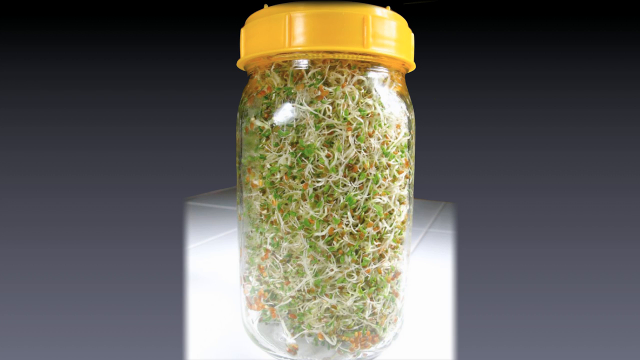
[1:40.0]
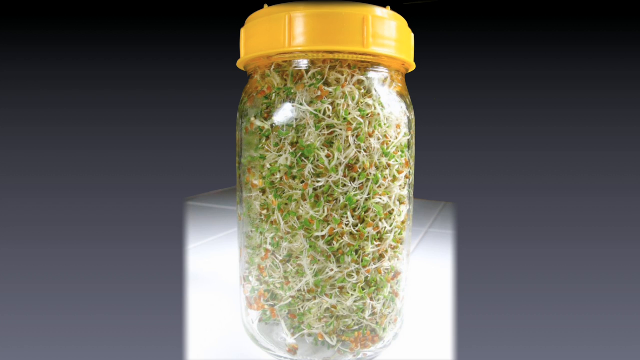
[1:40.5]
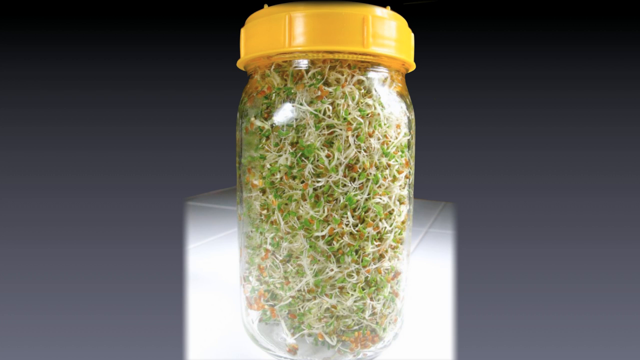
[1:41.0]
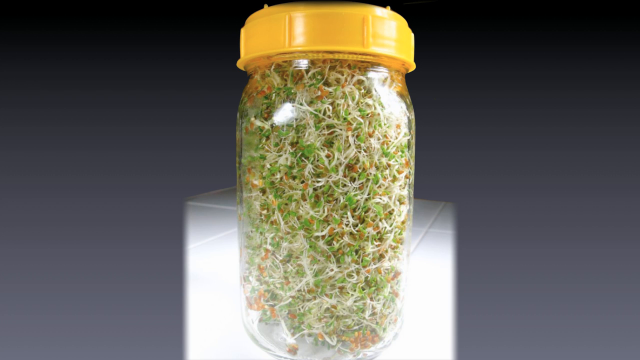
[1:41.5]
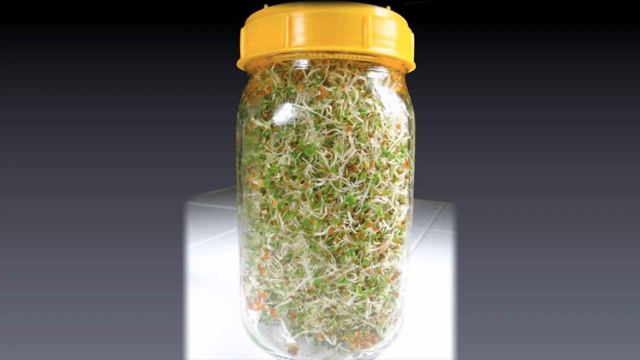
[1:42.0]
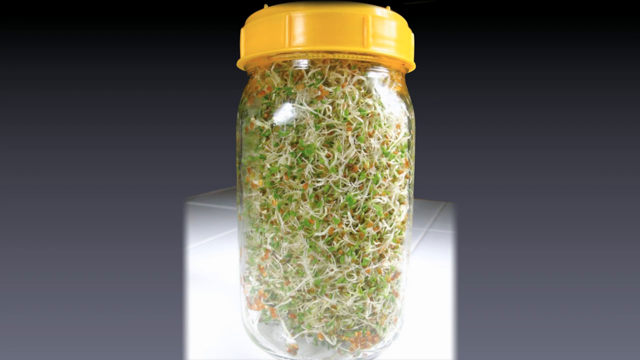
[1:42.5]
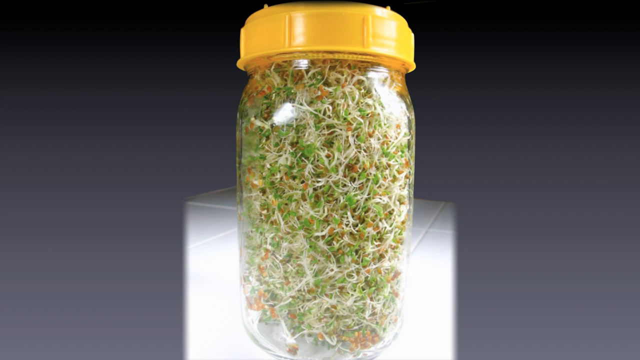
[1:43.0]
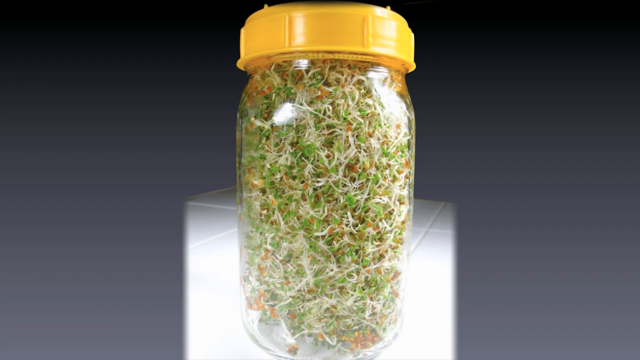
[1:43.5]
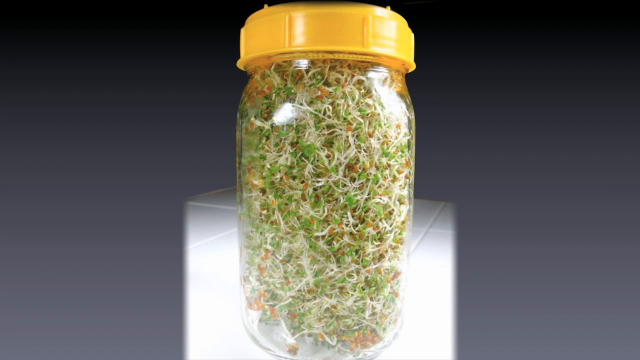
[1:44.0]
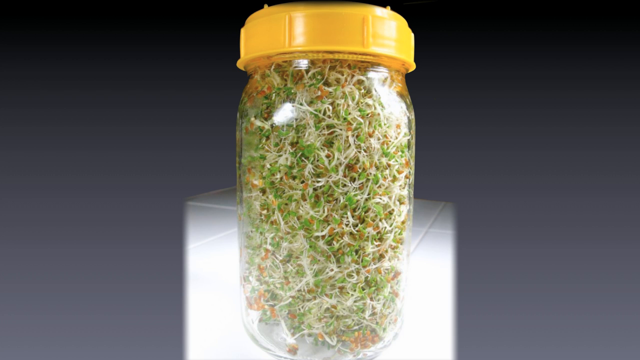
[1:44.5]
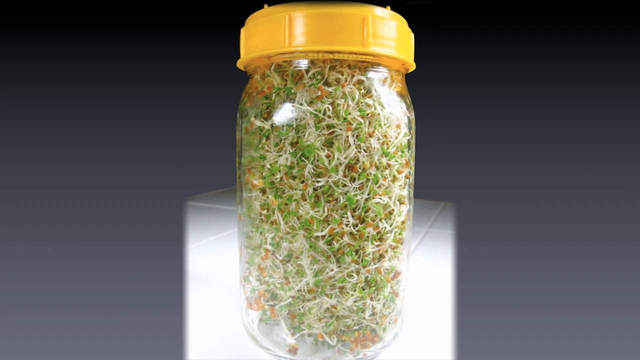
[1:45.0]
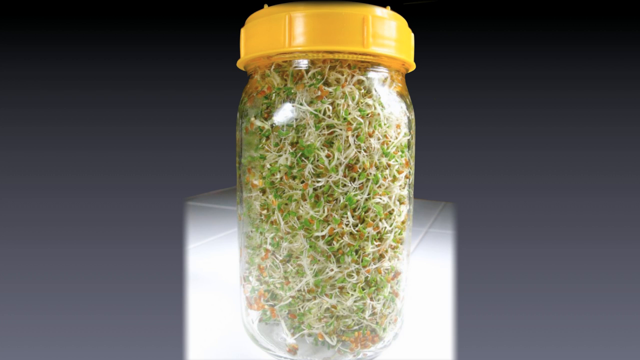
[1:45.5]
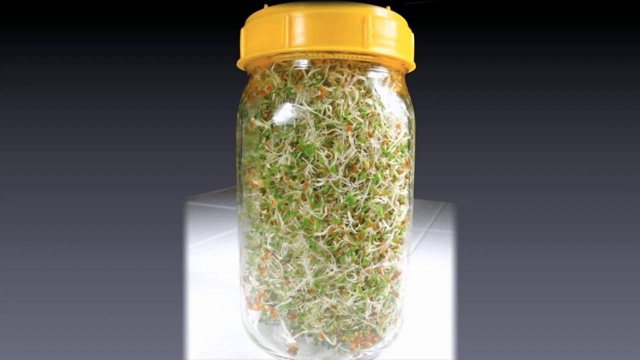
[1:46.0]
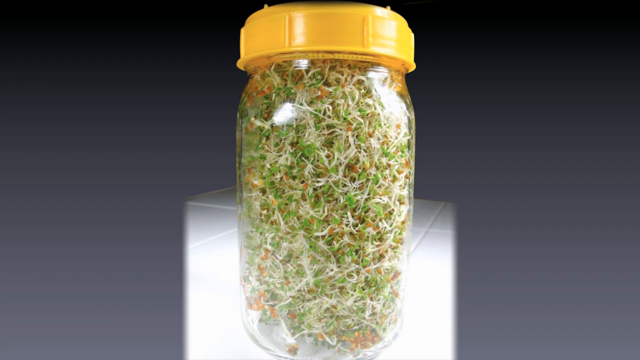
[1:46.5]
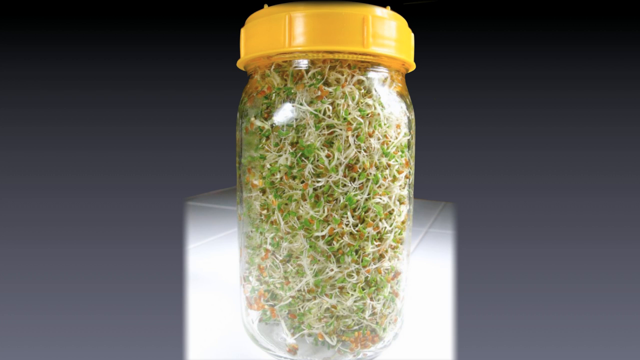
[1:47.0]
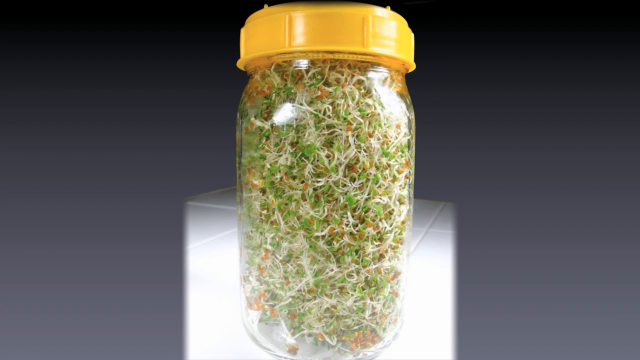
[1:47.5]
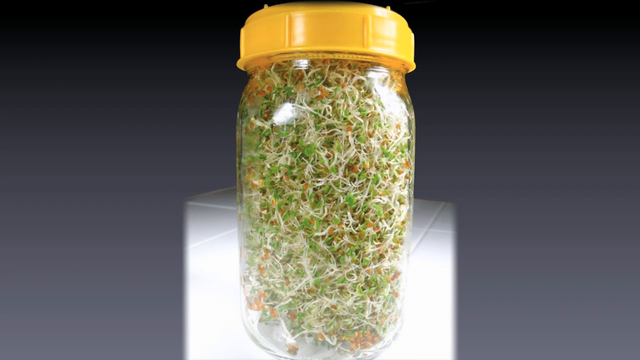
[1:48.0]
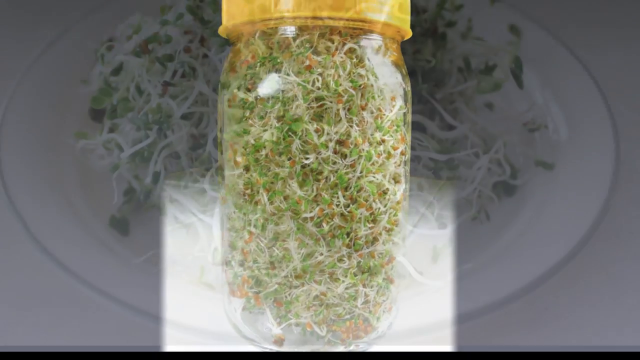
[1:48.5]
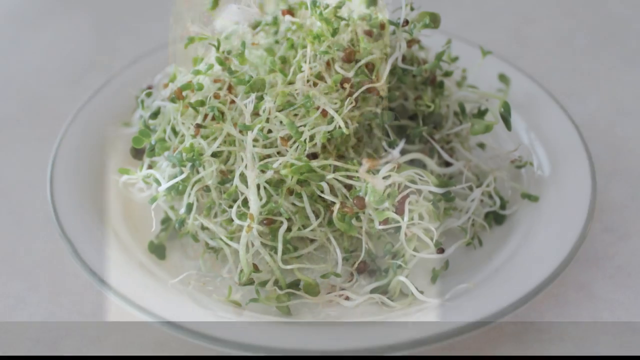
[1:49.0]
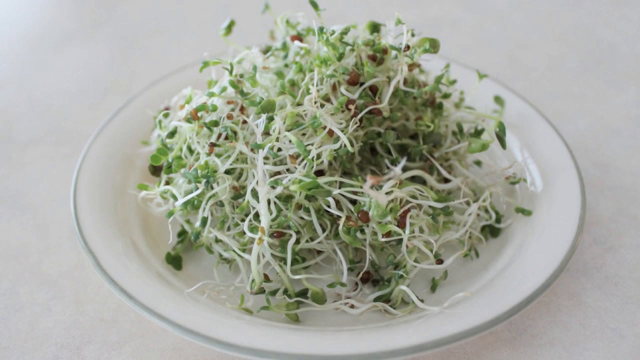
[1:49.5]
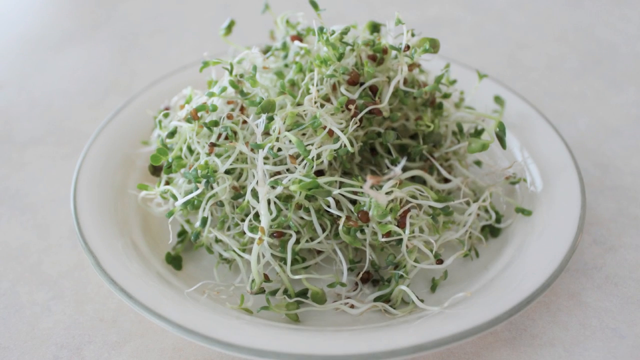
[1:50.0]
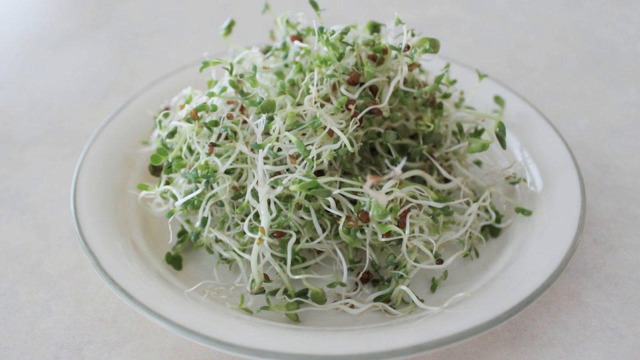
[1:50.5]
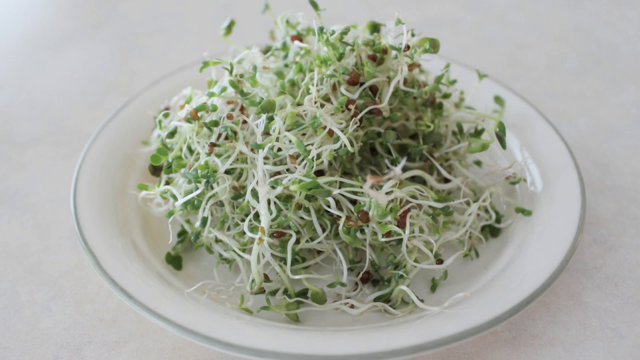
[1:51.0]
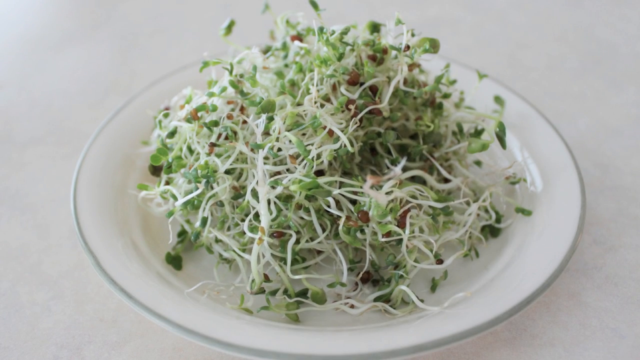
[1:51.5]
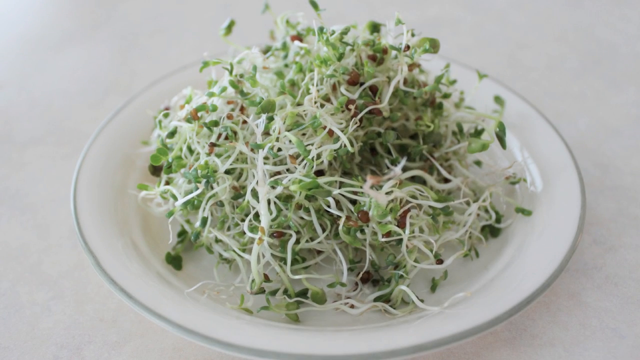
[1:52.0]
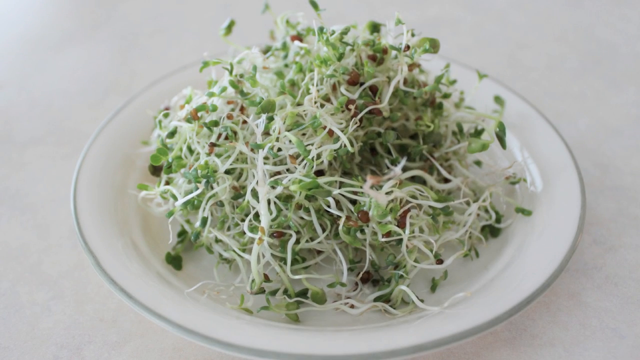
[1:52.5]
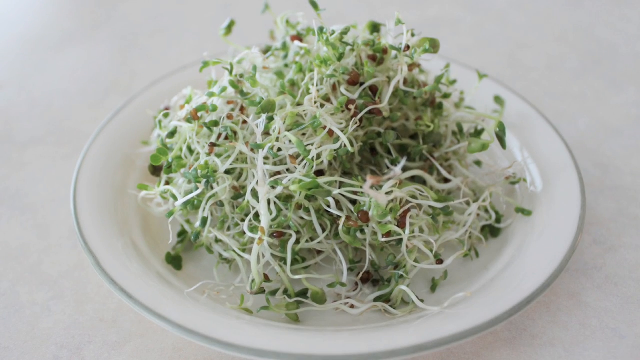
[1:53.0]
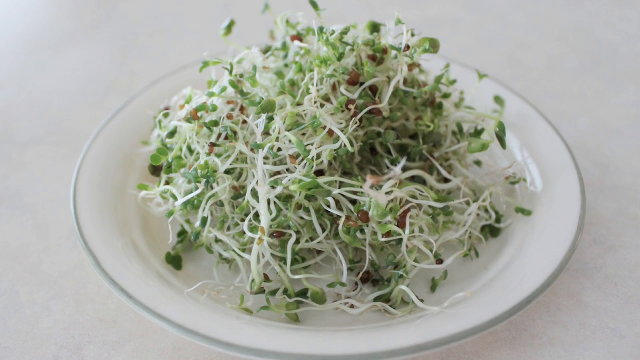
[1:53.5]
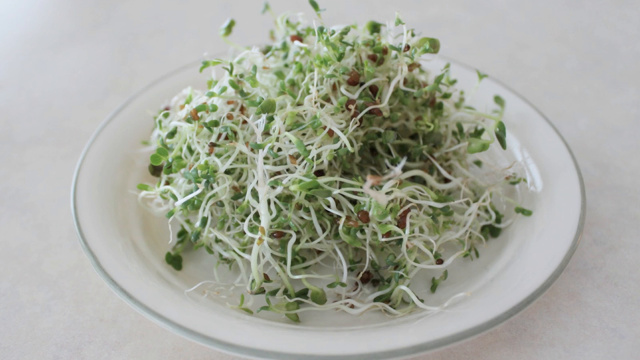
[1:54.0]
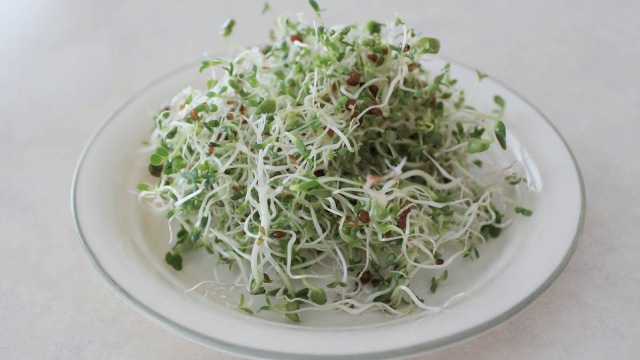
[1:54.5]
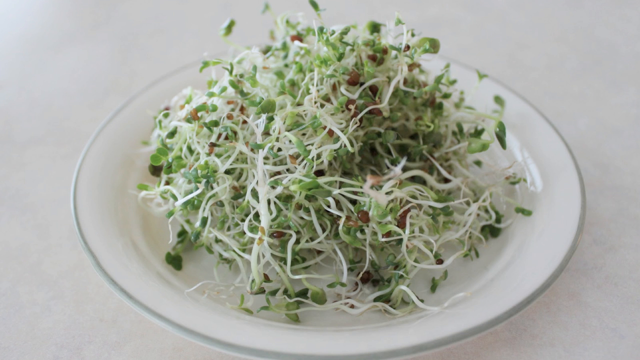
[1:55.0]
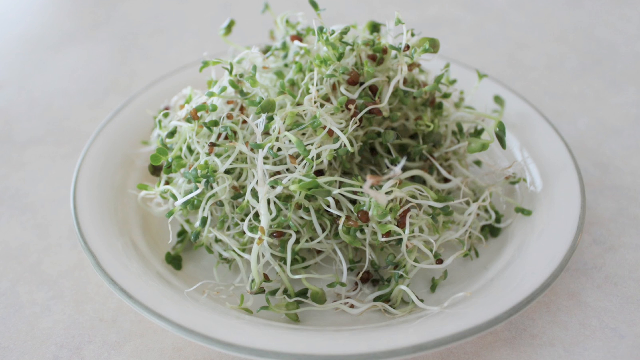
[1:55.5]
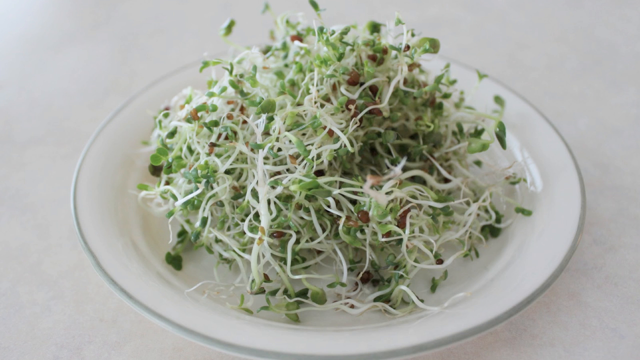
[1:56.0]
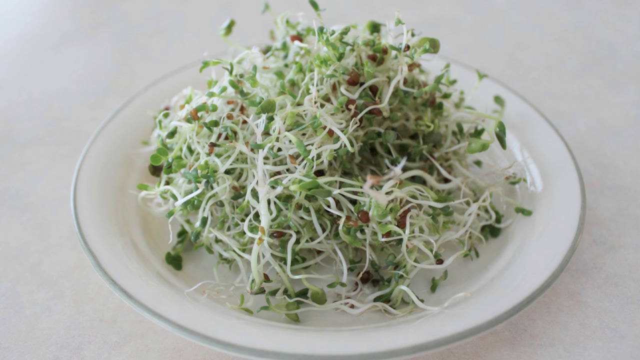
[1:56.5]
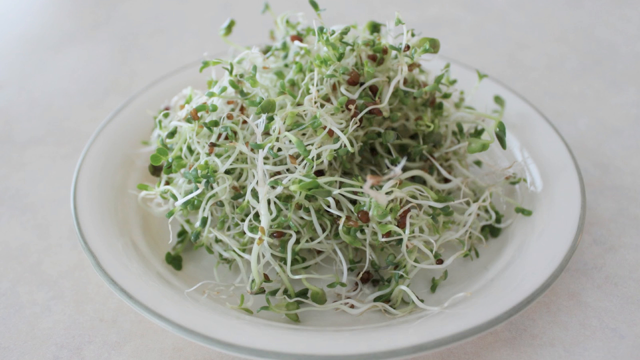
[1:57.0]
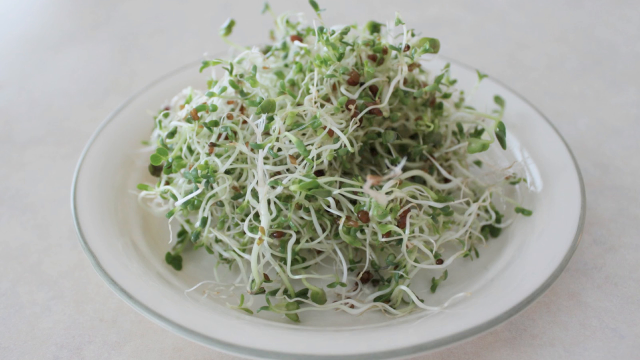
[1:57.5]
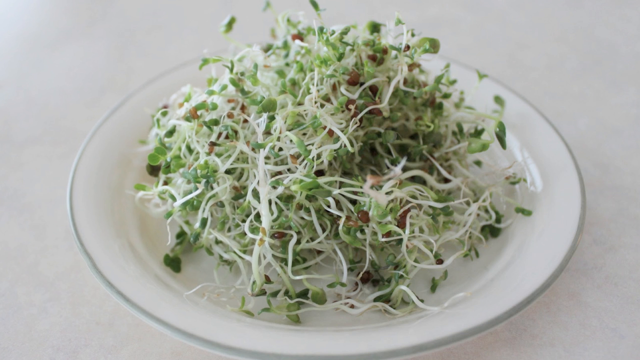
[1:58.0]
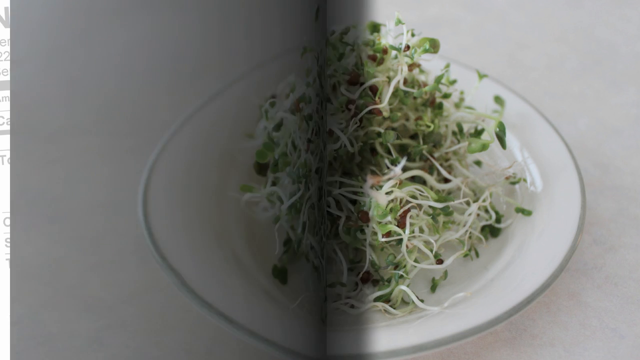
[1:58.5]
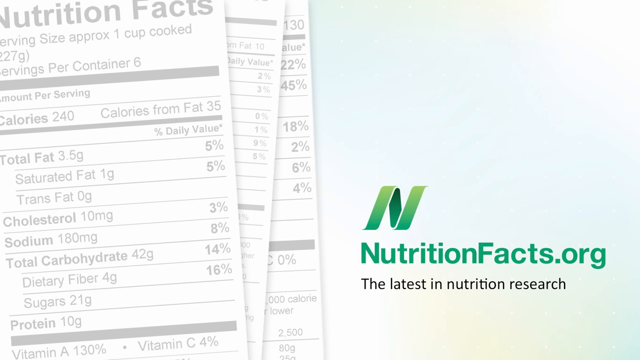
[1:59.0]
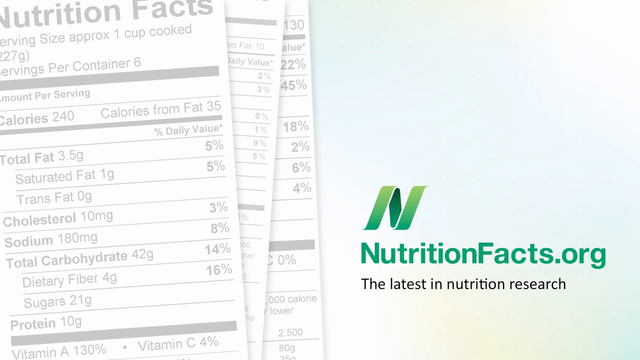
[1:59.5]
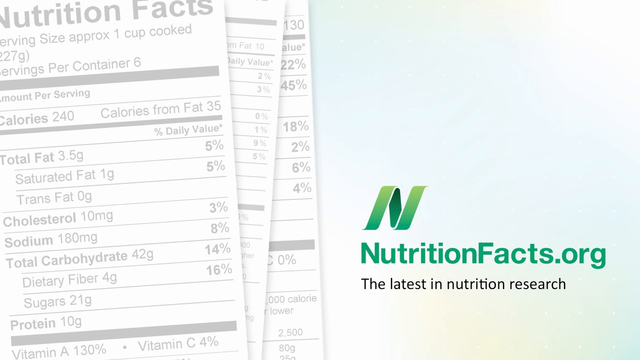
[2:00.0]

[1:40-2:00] A close-up shows the contents of the transparent glass bottle with the yellow lid: something like green plants growing inside, with the white part very visible, mixed with something somewhat brown or orange. The contents are then put onto a white plate framed in grey. The scene changes to white, including the background, and the backgrounds and surfaces look very clean. A closer look shows what seem like seeds that were growing in a bottle. On the plate the contents look heaped but very presentable and colourful, green and white with some orange or brown, and look like they were grown in the bottles before being put on the plate.